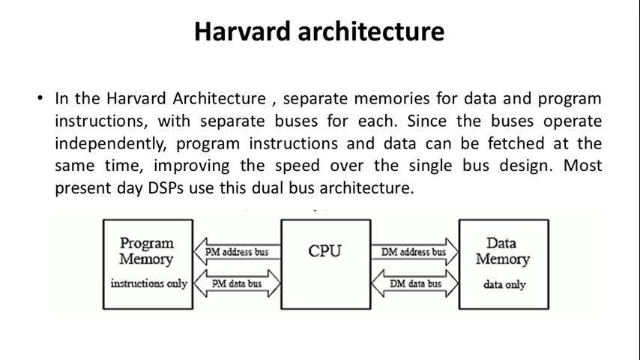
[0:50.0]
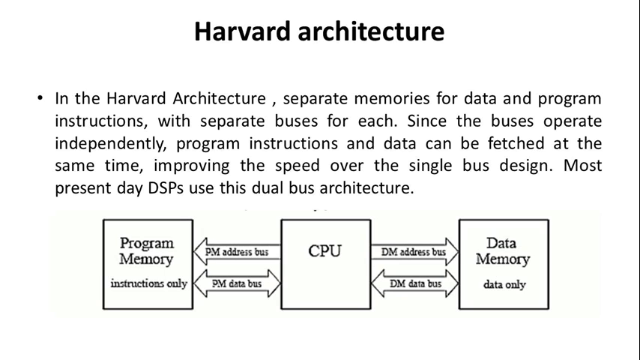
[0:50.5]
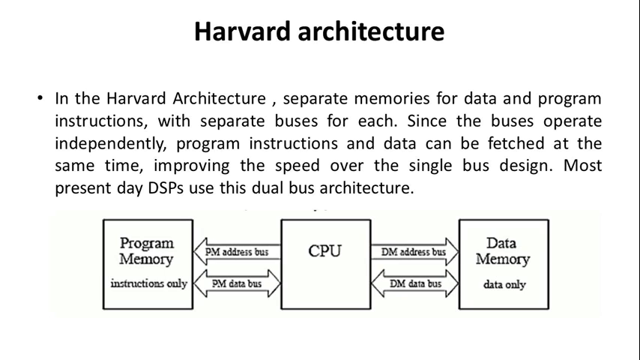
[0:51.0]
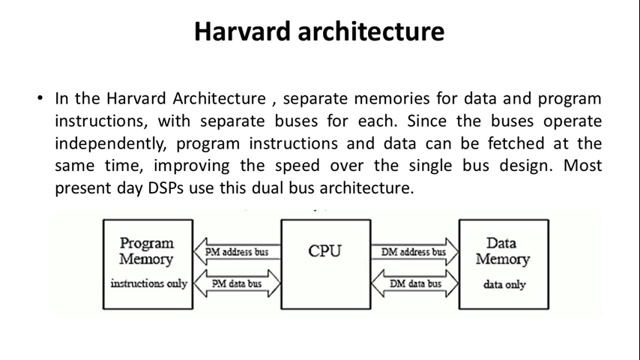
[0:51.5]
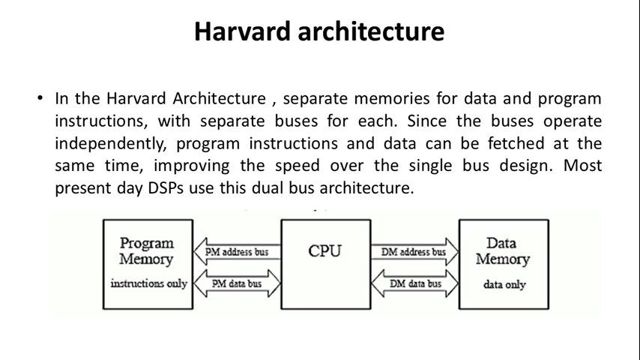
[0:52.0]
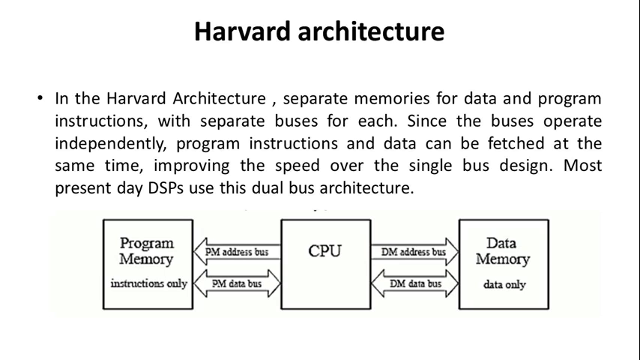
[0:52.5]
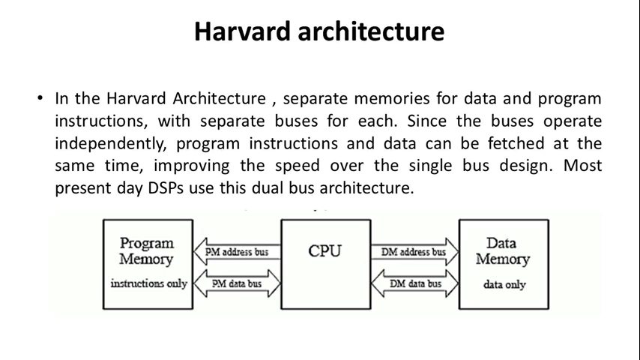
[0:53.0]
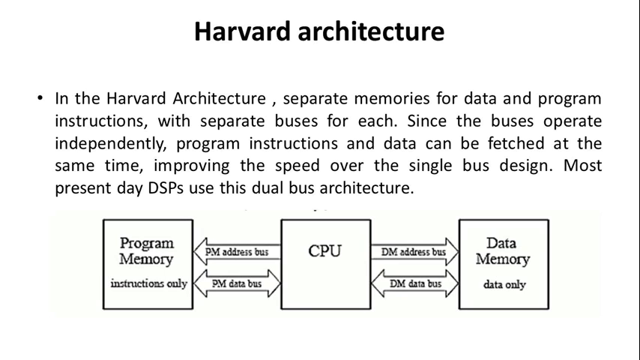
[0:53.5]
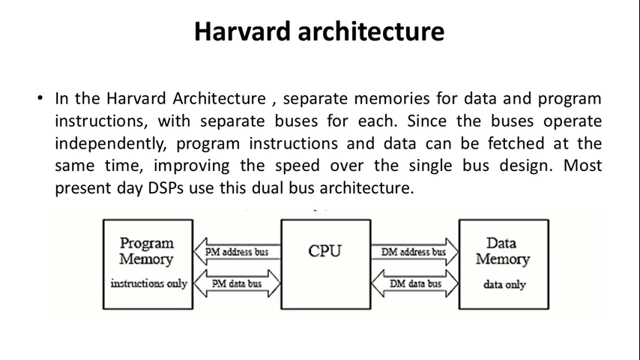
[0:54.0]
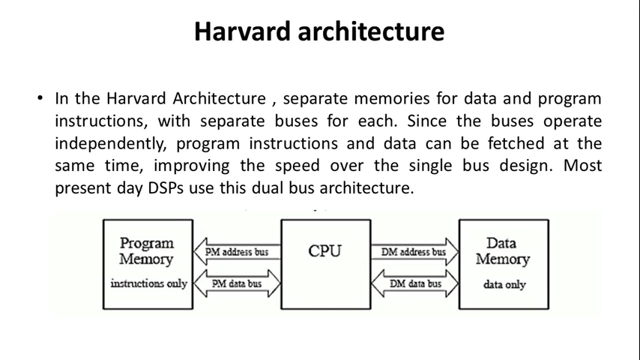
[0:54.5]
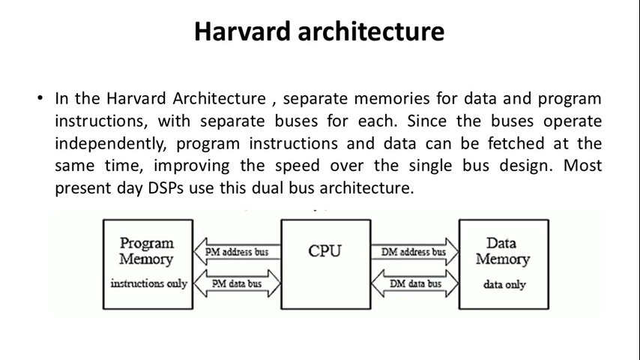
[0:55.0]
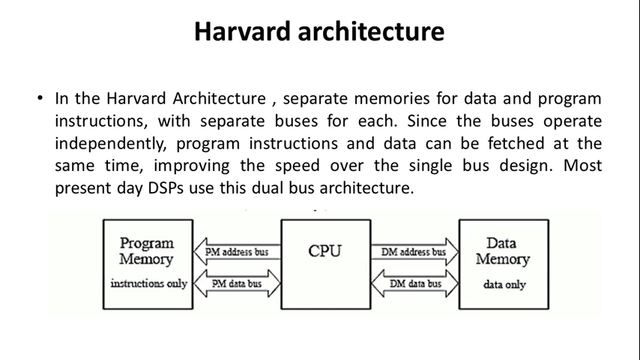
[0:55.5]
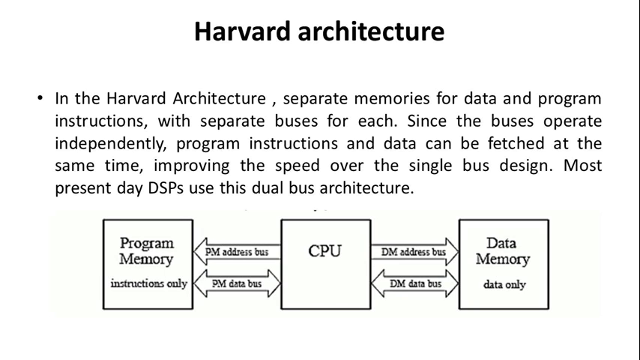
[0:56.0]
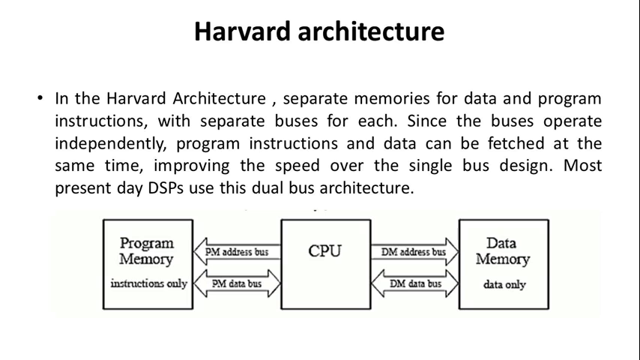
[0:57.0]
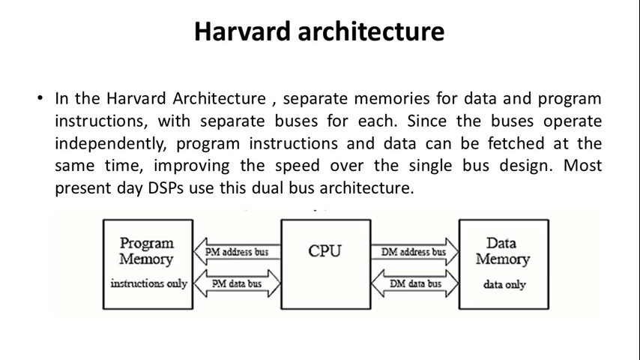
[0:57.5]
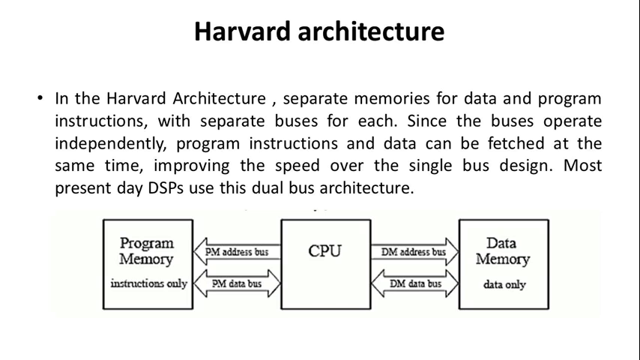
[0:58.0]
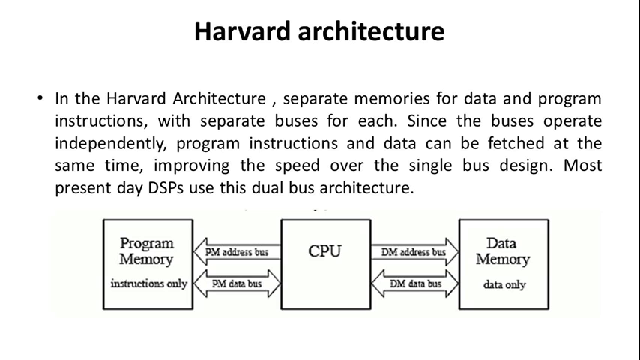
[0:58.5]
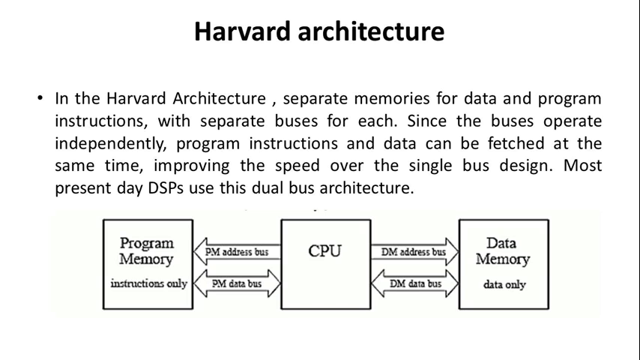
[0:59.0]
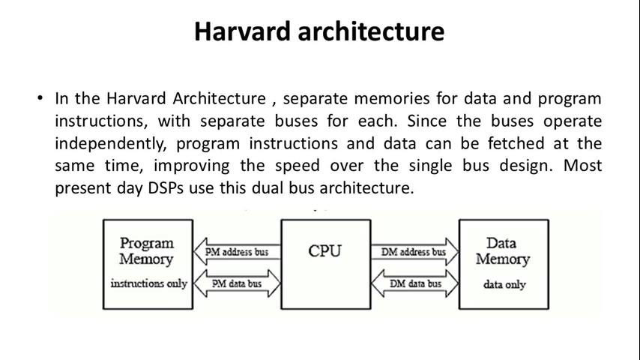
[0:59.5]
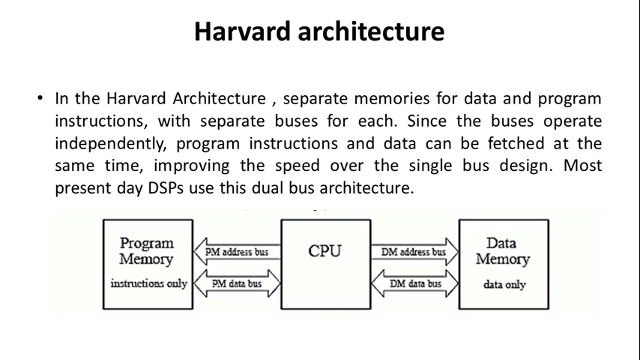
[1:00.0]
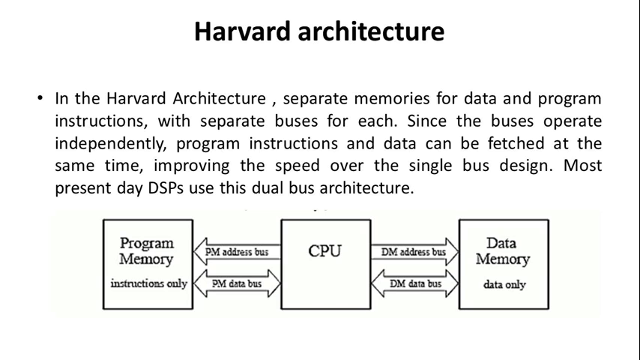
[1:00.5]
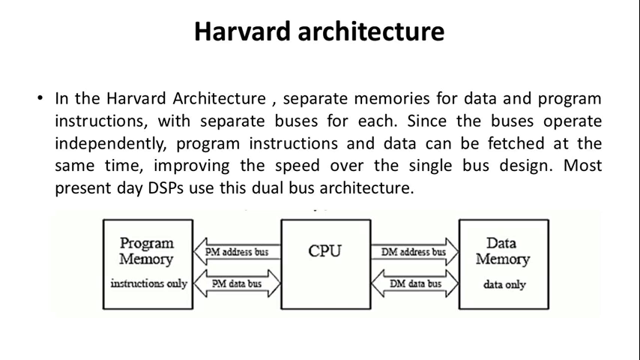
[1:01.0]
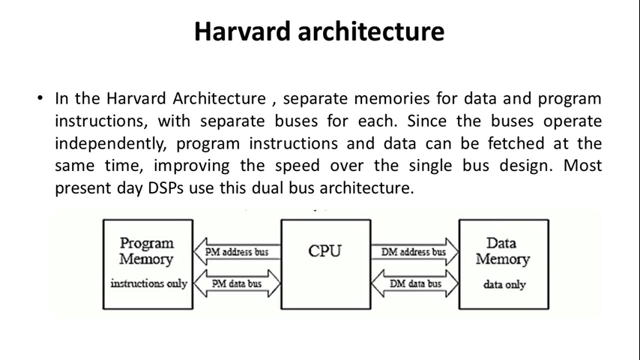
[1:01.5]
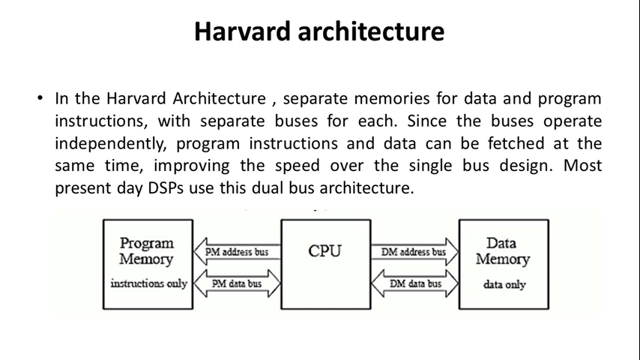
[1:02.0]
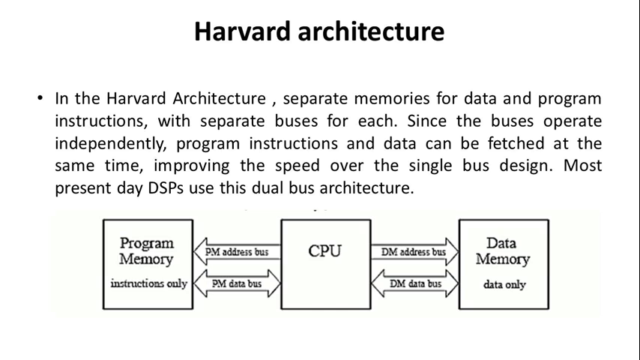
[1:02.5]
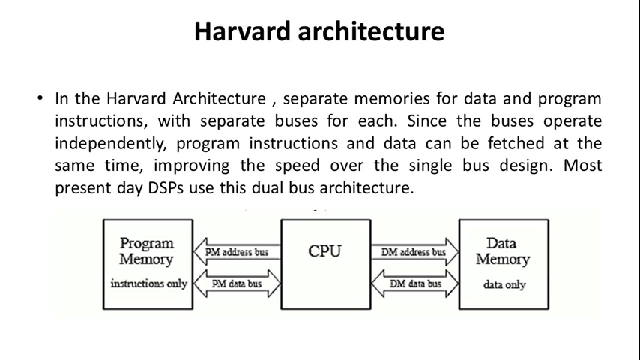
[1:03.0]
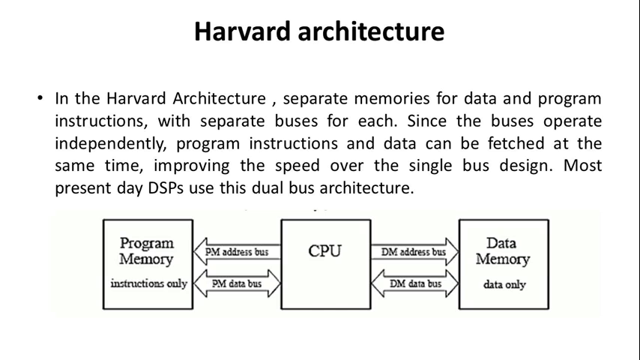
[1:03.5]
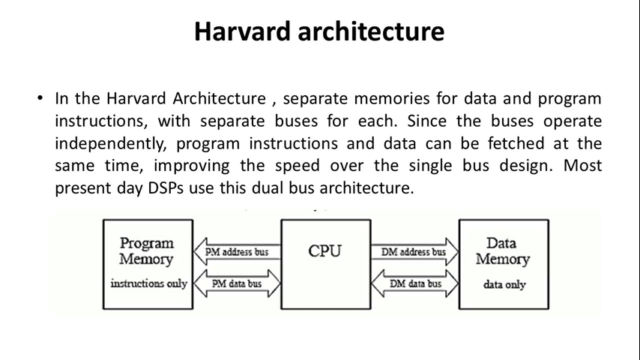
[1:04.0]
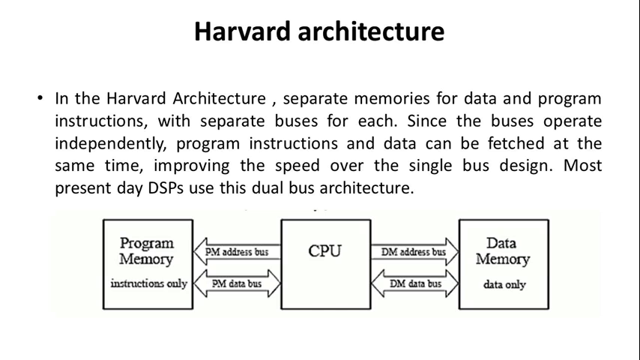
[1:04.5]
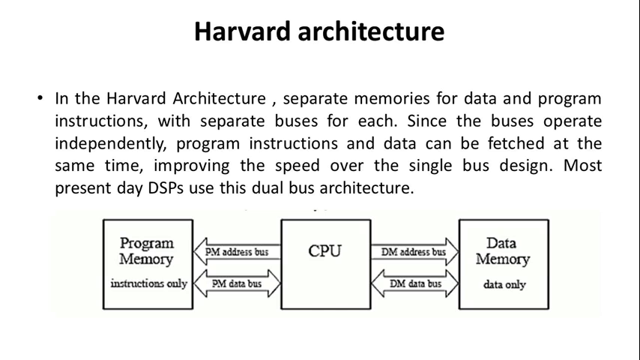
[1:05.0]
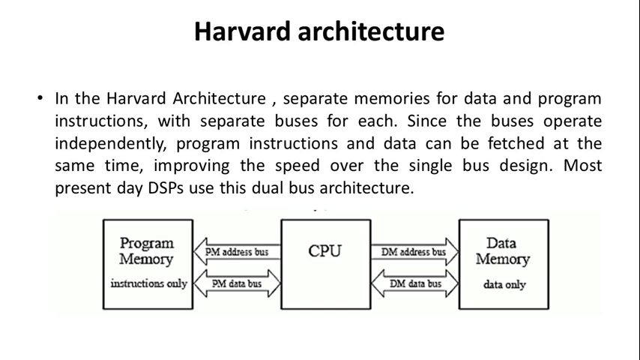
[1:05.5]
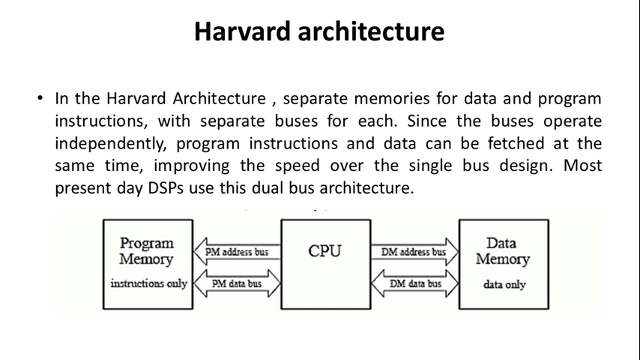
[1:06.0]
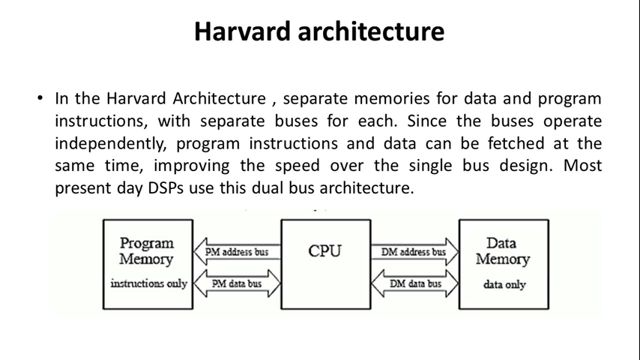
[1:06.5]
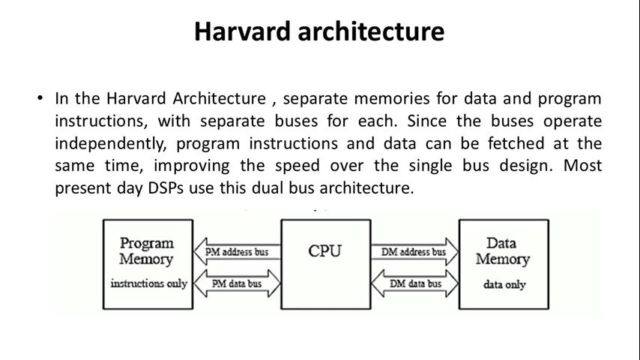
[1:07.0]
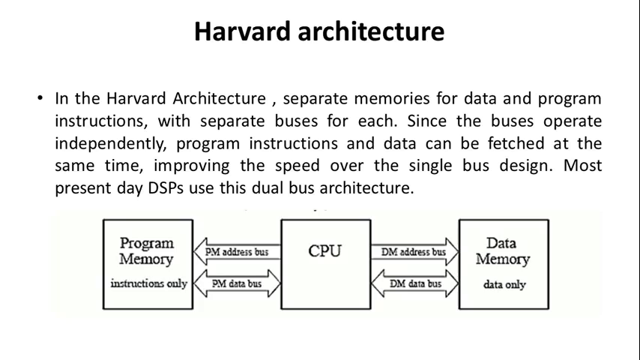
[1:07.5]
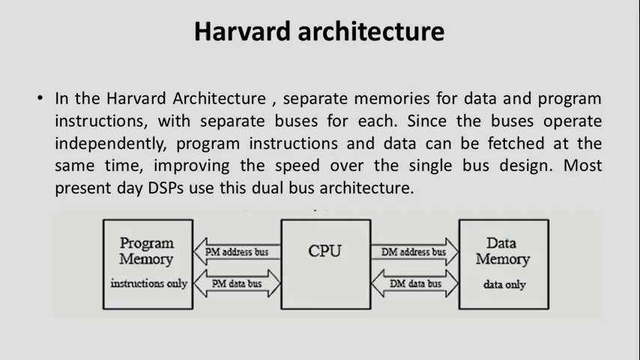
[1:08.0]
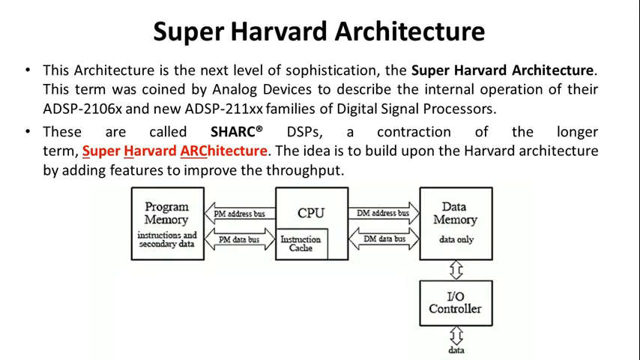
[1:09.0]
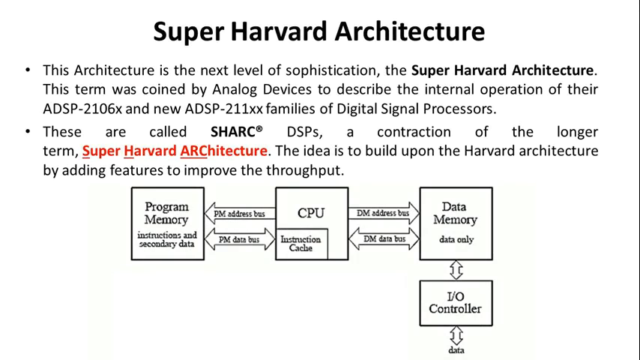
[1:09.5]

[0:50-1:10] Black text on a white background has the title "Harvard Architecture." Below it, a description states that Harvard Architecture separates memories for data and program instructions with separate buses for each, followed by a more detailed explanation. A diagram below shows three boxes: one labeled "Program Memory," one in the center labeled "CPU," and one on the right labeled "Data Memory," with arrows going from the CPU to each of the other two boxes. The screen then changes to a new black title, "Super Harvard Architecture." The text states that Super Harvard Architecture is the next level of sophistication and gives more details about it, stating that it was built upon the Harvard architecture by adding new features. More is added to the diagram, including a new small box called "IOController" below the data memory box.